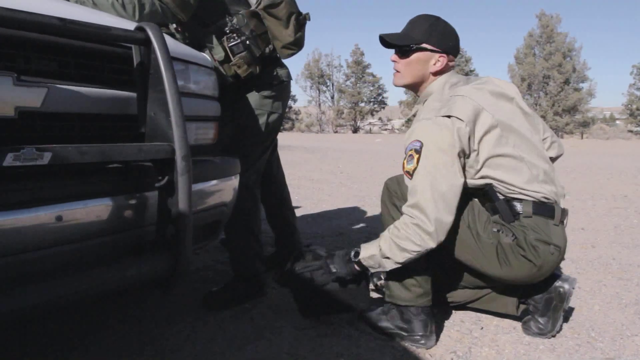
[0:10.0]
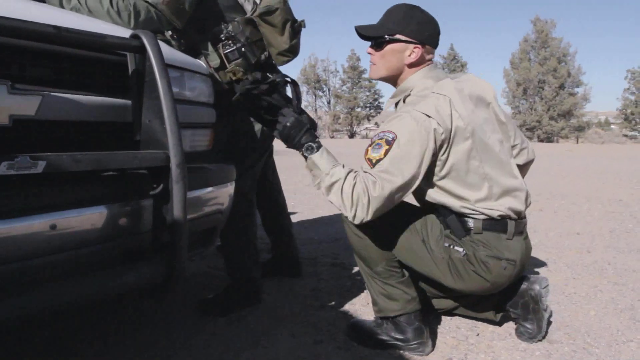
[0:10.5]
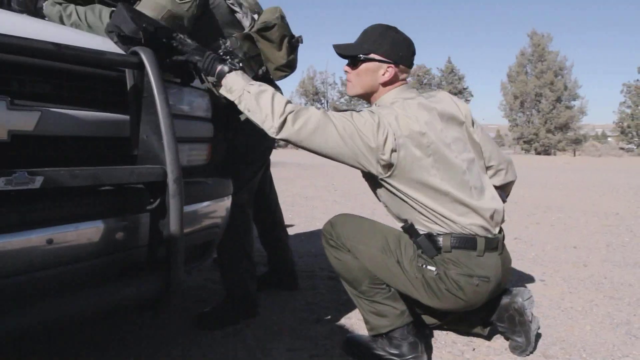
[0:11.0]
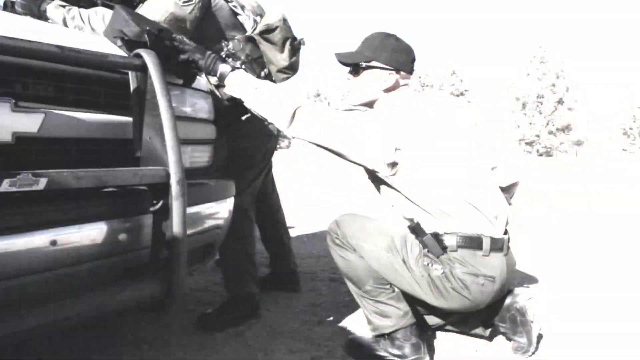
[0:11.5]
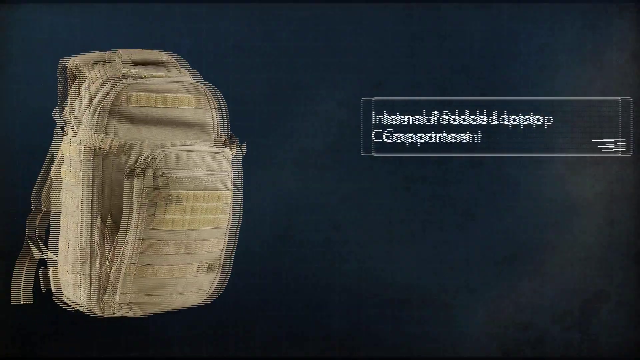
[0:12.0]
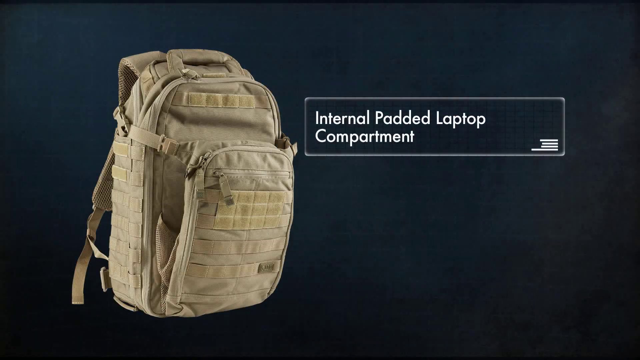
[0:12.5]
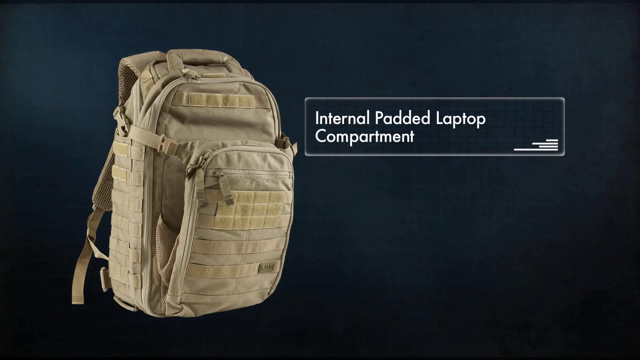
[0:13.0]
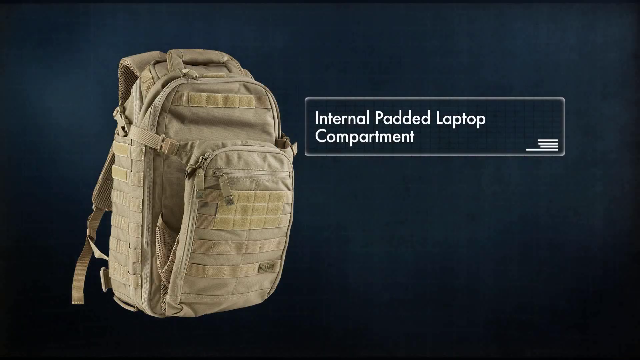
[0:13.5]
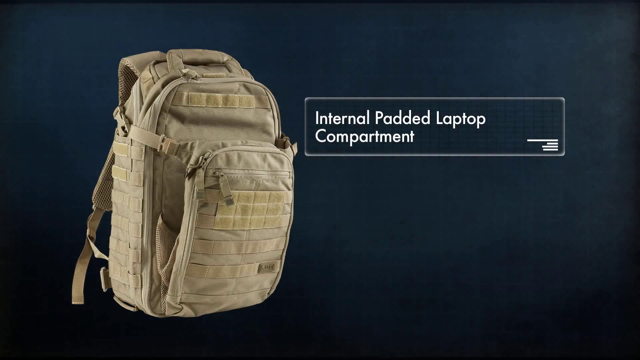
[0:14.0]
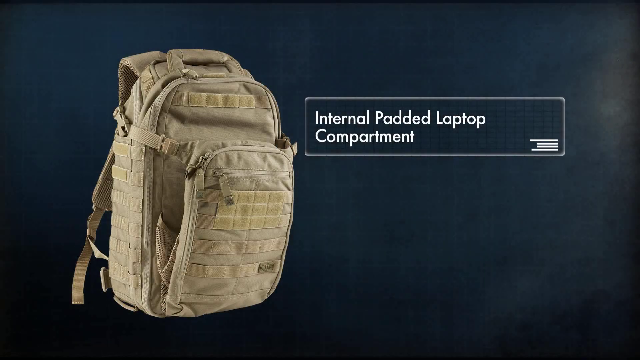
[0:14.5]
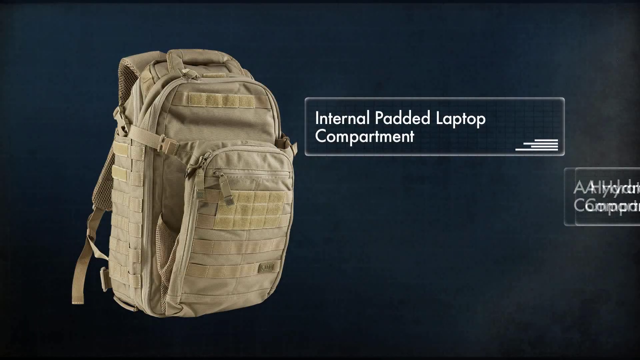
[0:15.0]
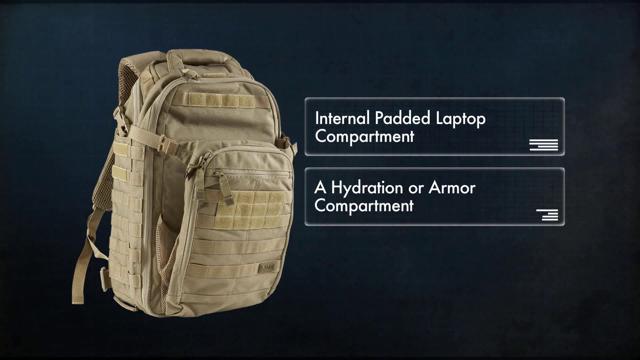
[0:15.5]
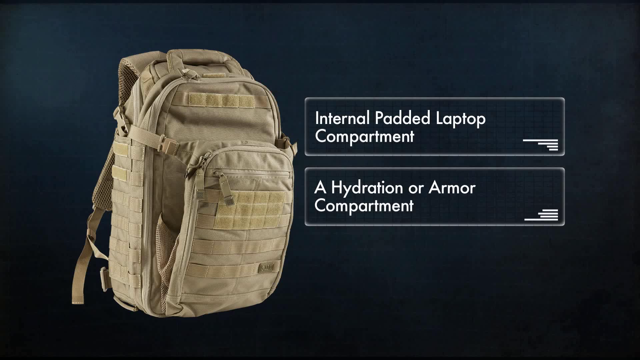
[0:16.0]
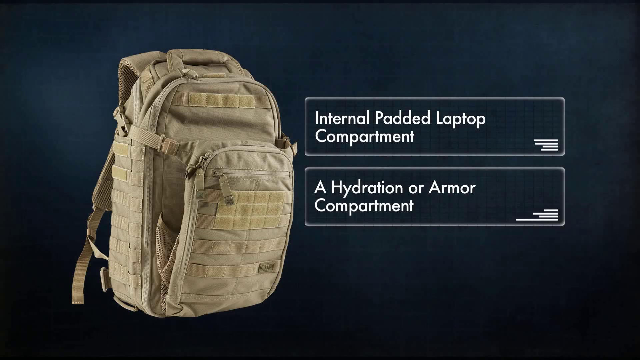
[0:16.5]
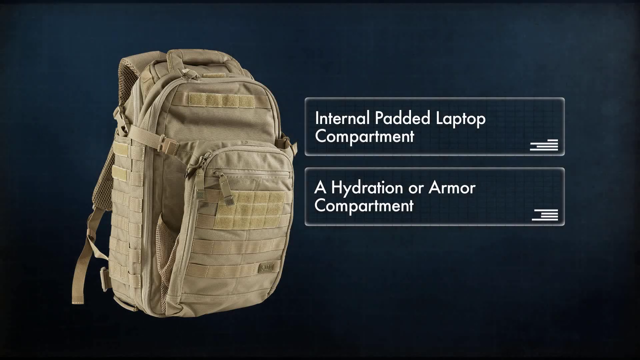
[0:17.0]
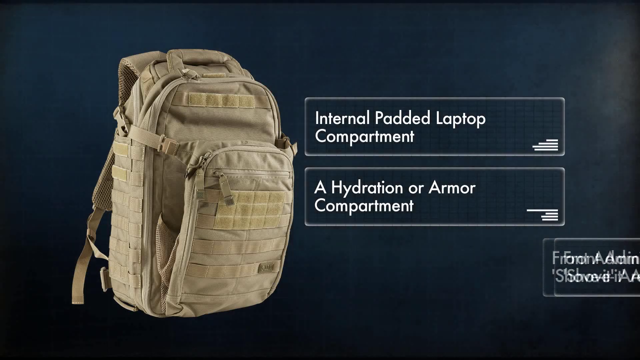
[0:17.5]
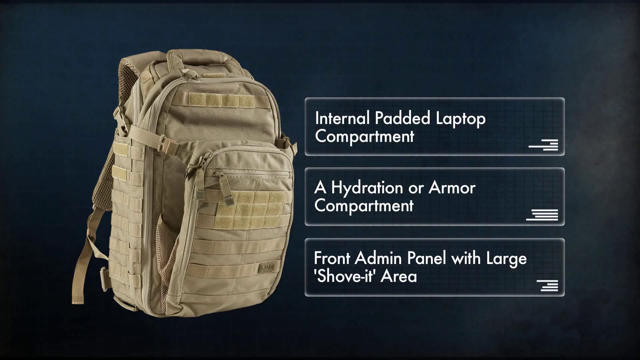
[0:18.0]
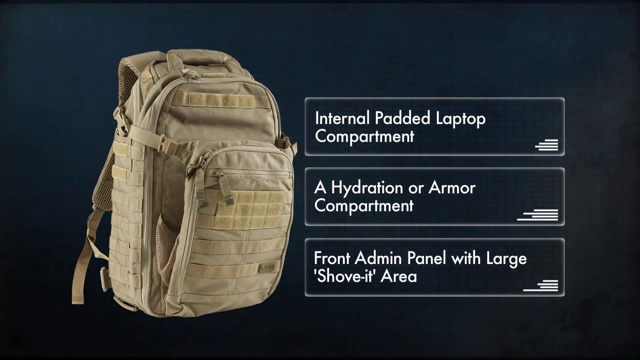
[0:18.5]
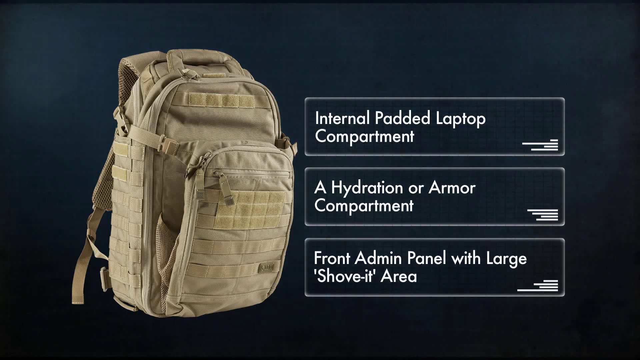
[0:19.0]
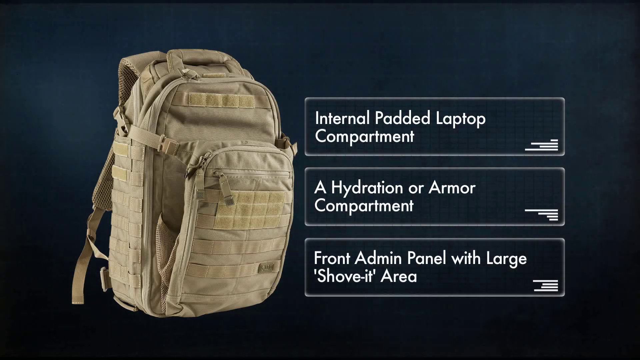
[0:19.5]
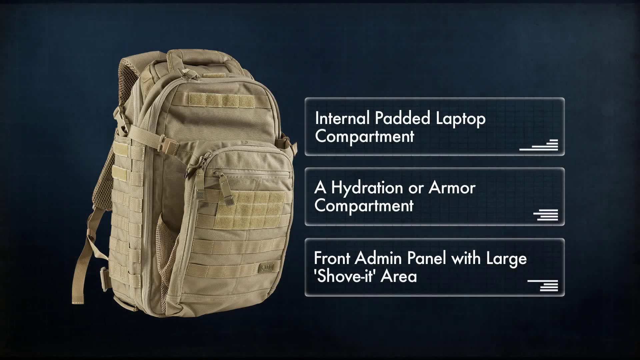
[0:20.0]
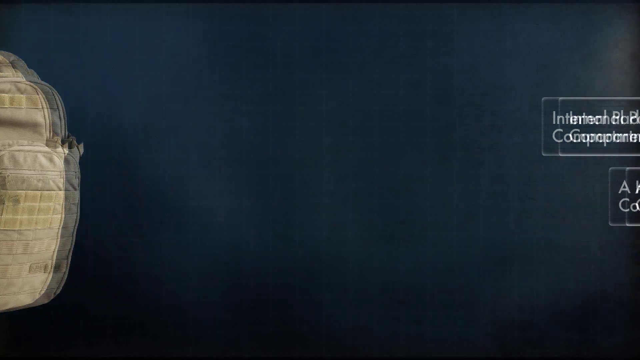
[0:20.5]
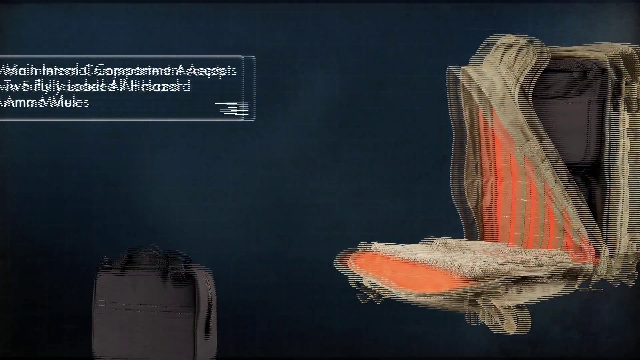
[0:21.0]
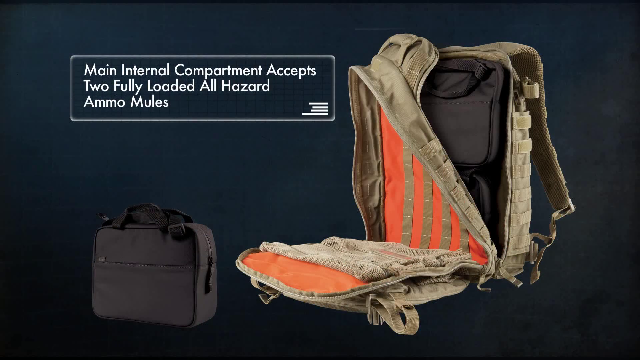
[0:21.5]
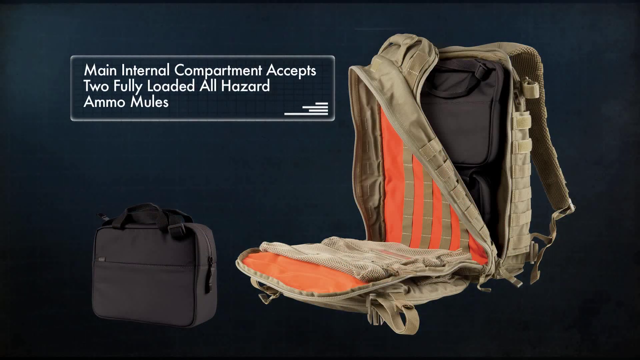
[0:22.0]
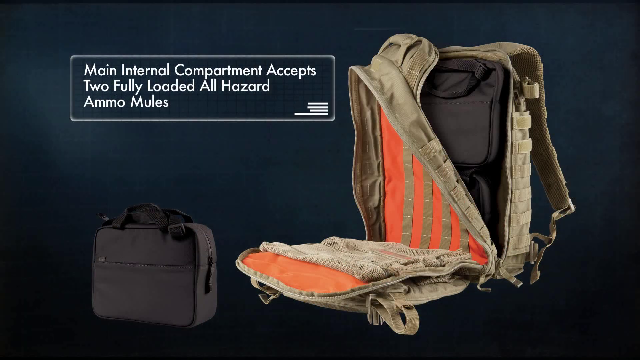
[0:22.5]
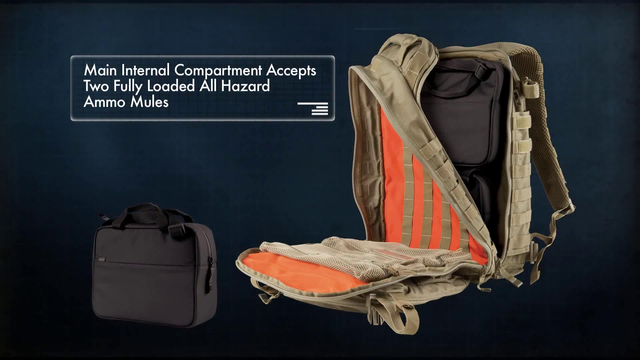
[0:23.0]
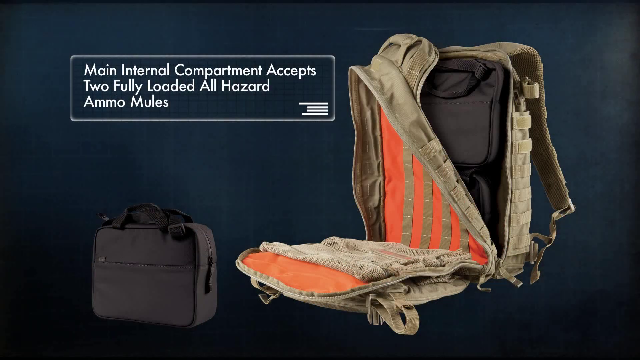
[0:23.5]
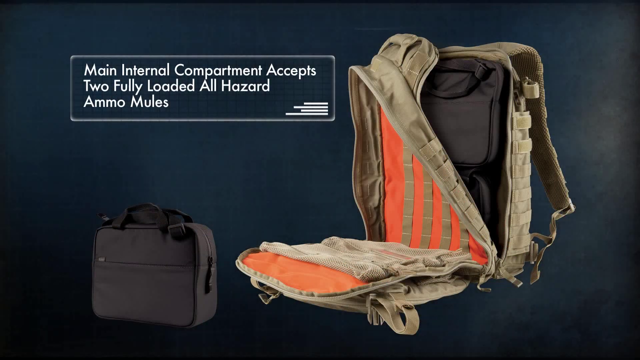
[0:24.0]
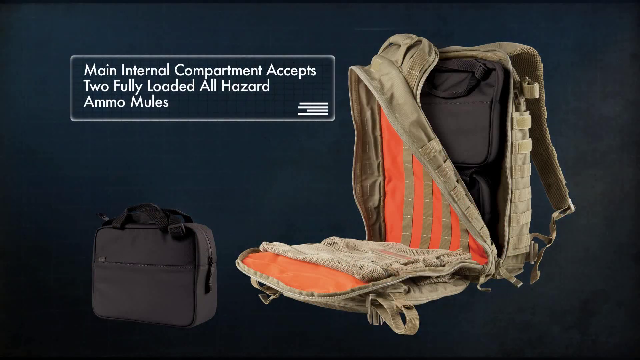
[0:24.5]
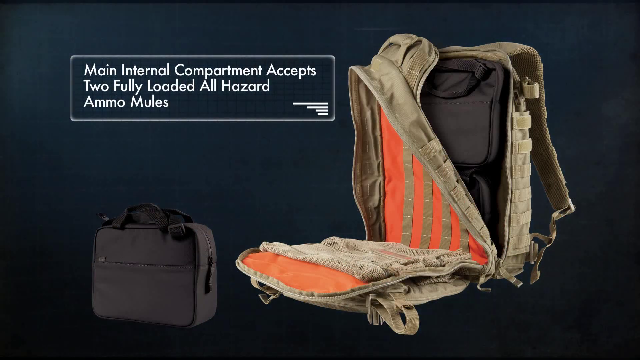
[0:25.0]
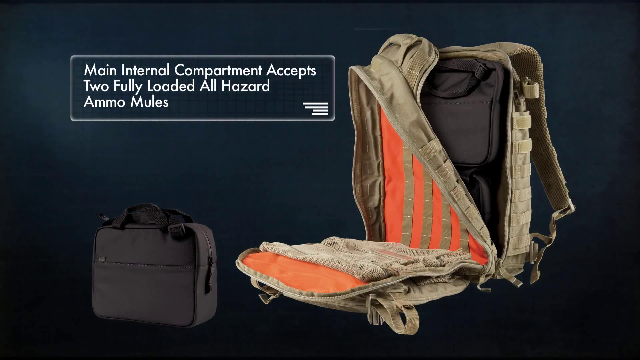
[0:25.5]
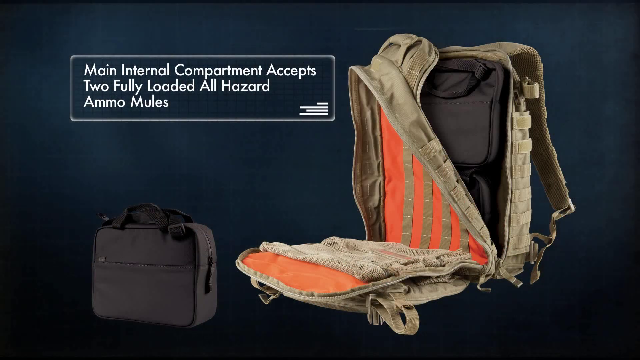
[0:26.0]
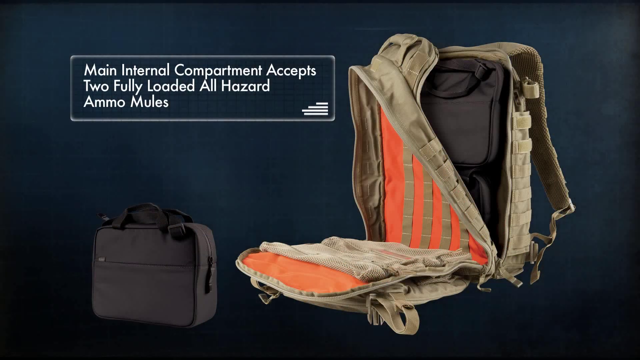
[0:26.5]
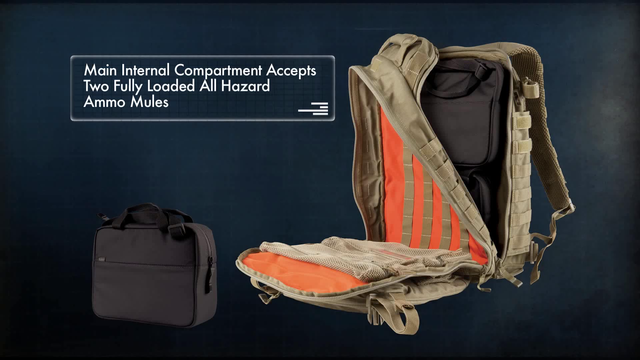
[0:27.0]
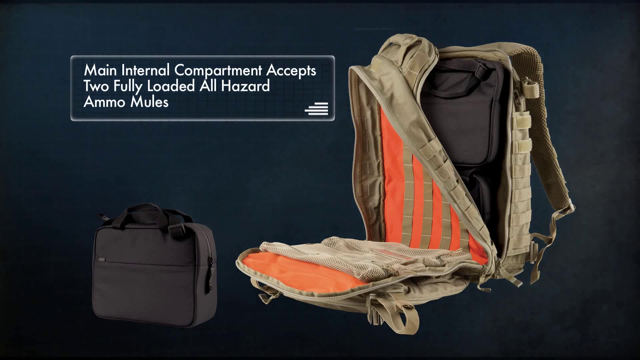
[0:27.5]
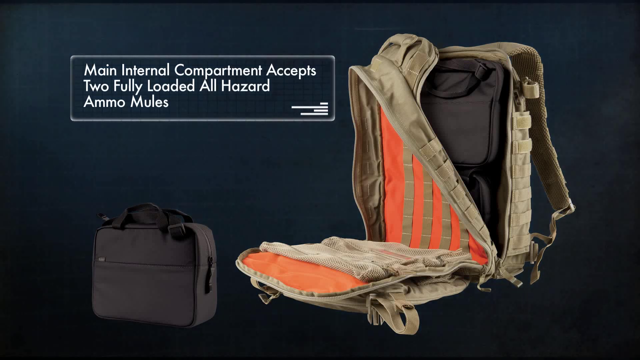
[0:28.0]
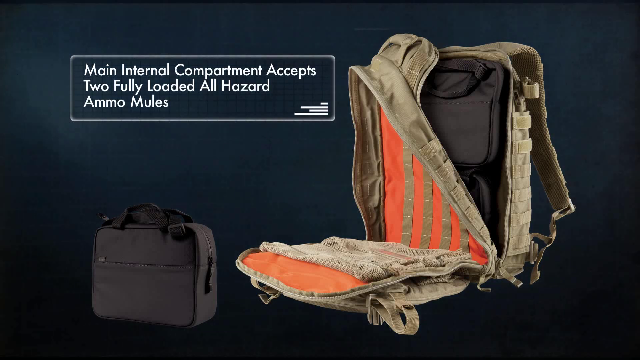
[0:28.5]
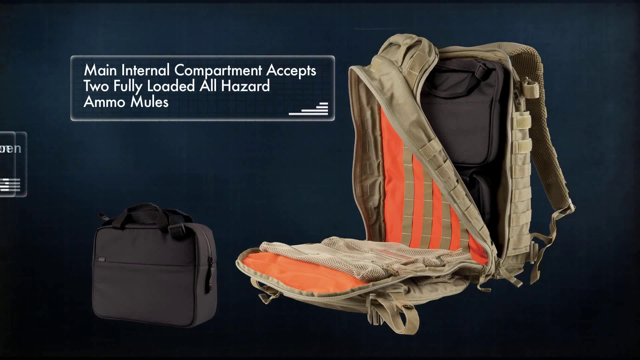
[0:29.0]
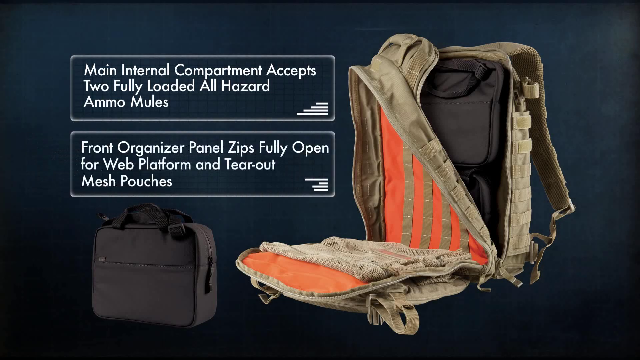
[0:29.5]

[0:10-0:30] A police officer wears a tan long collared shirt, green pants, a black belt, a black hat and black sunglasses. He is crouching in front of the side of a van in the middle of a desert, with a few tall trees in the background. The screen then transitions to an image of a big backpack in front of a dark blue background, with text stating that the backpack has an "internal padded laptop compartment". Another piece of text flies in, showing that the backpack features a "hydration or armor compartment". Another piece of text slides into the screen, showing that the backpack has a "front admin panel with large shove-it area". The image of the backpack and the words slide out of the frame, and the inside of the backpack slides into frame with more words.